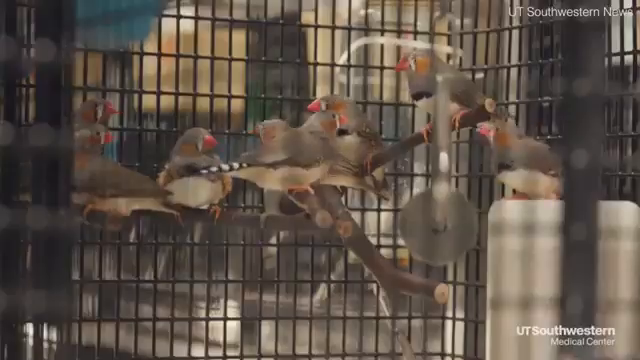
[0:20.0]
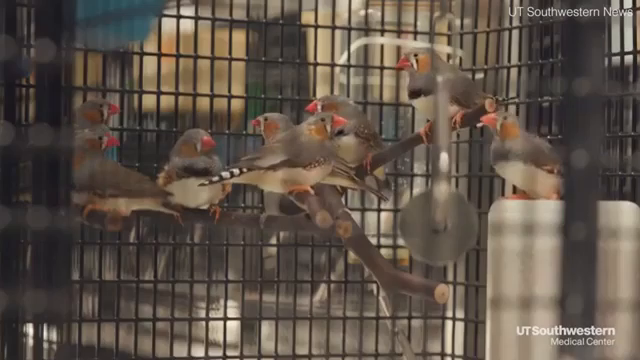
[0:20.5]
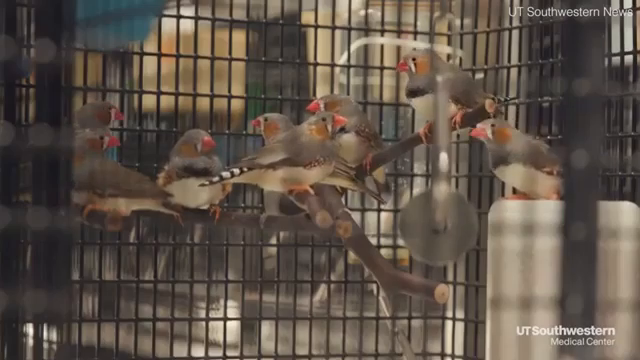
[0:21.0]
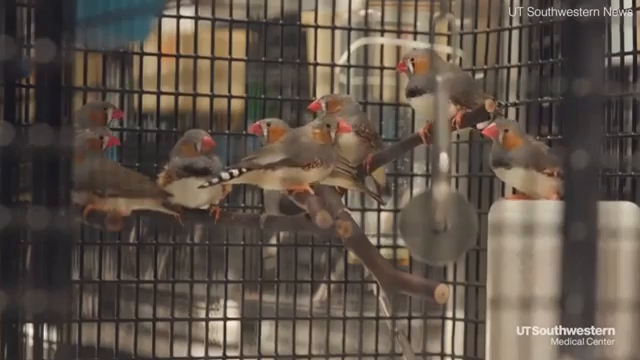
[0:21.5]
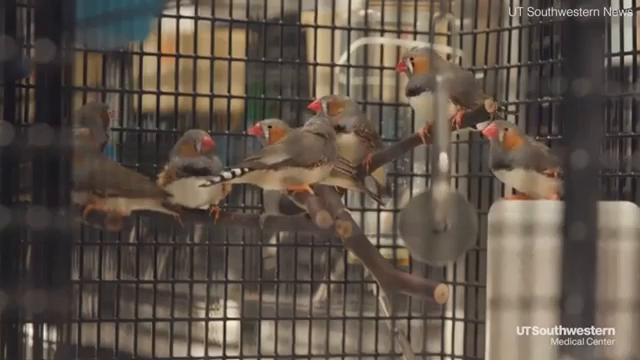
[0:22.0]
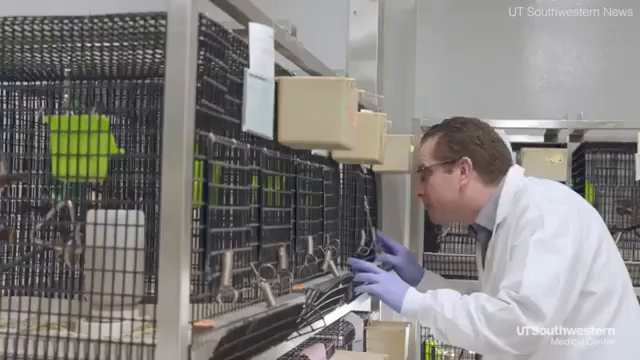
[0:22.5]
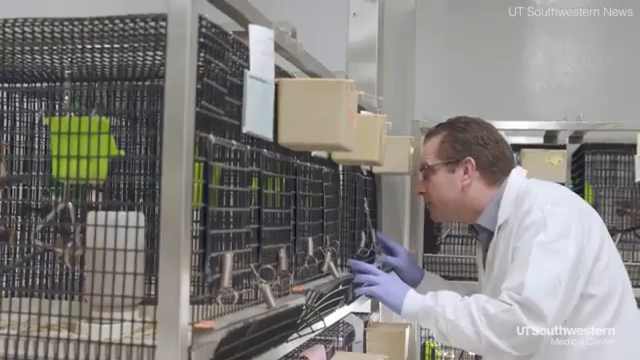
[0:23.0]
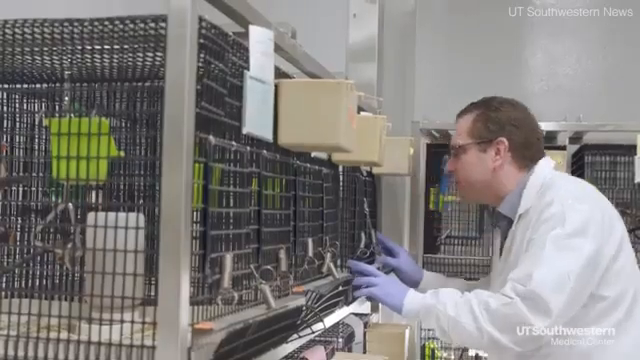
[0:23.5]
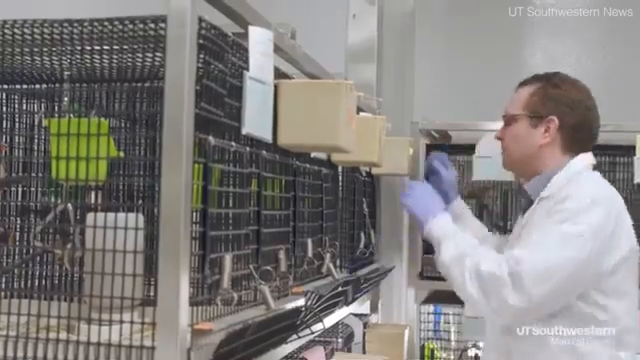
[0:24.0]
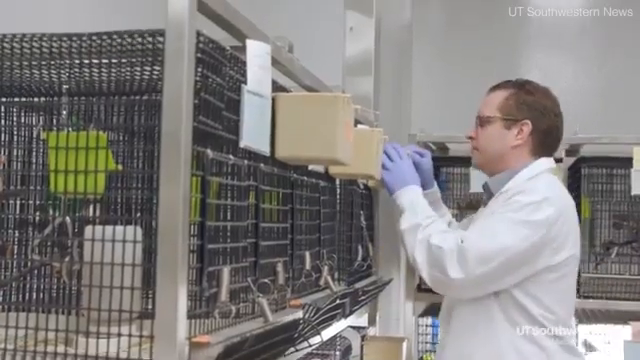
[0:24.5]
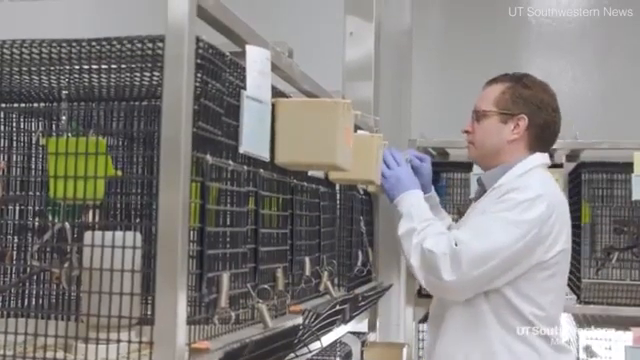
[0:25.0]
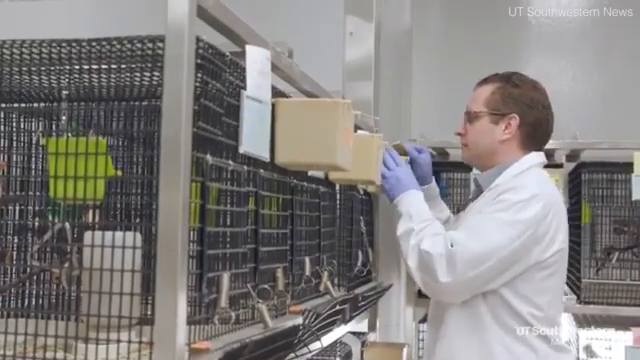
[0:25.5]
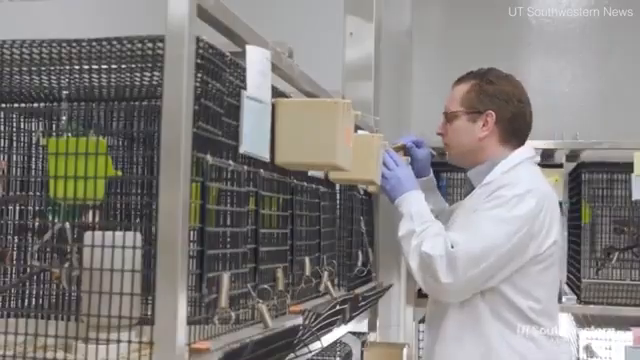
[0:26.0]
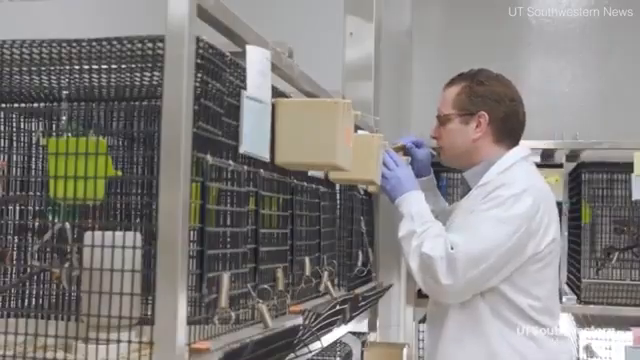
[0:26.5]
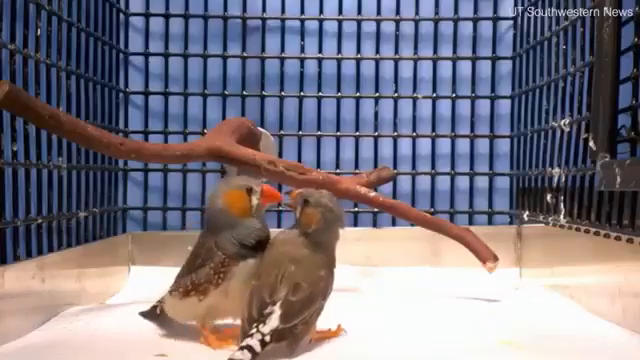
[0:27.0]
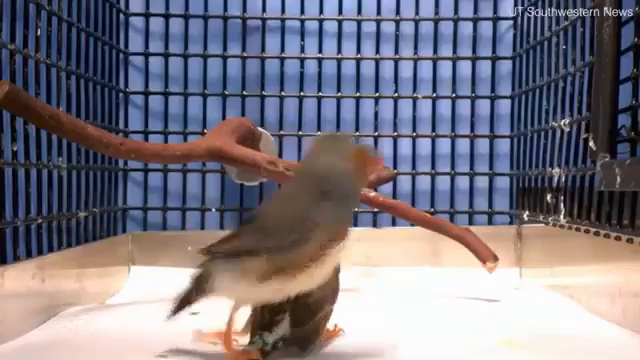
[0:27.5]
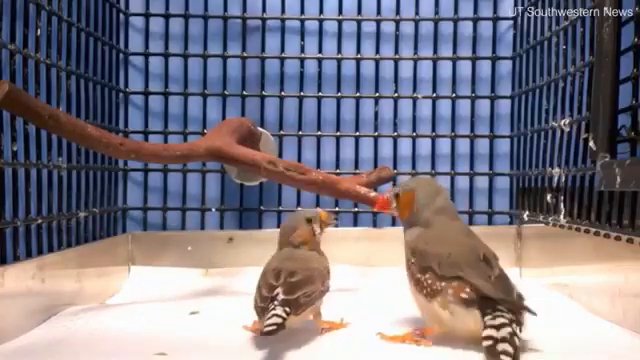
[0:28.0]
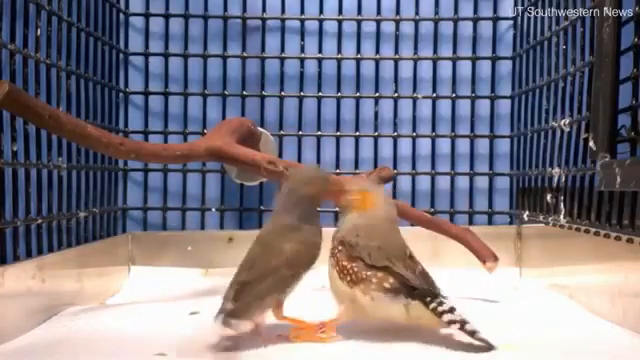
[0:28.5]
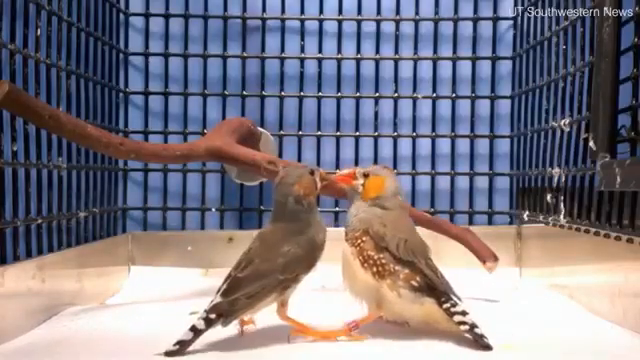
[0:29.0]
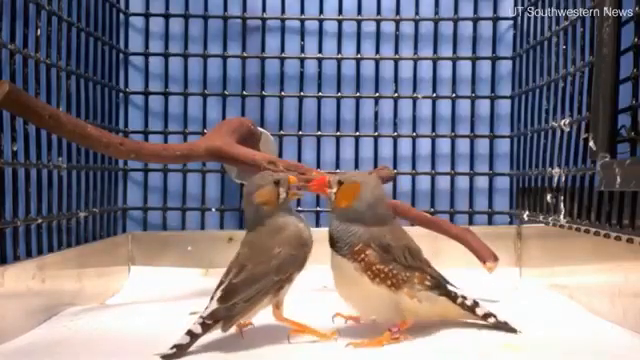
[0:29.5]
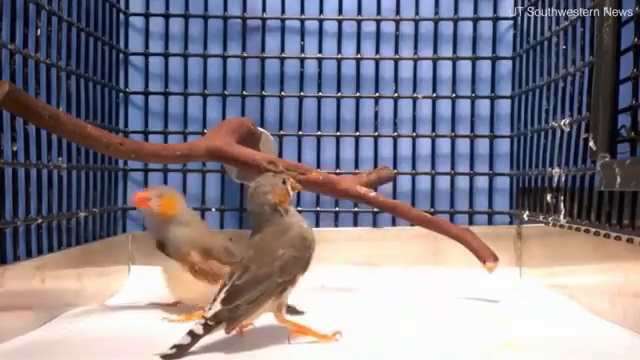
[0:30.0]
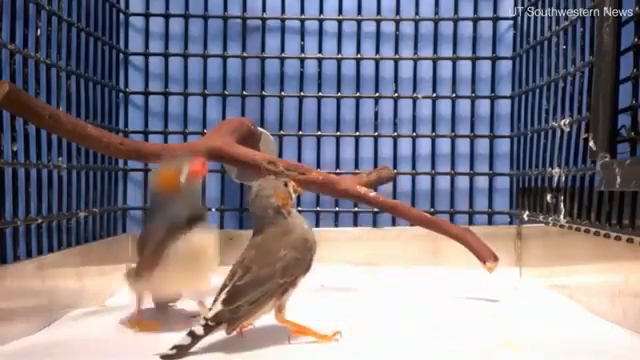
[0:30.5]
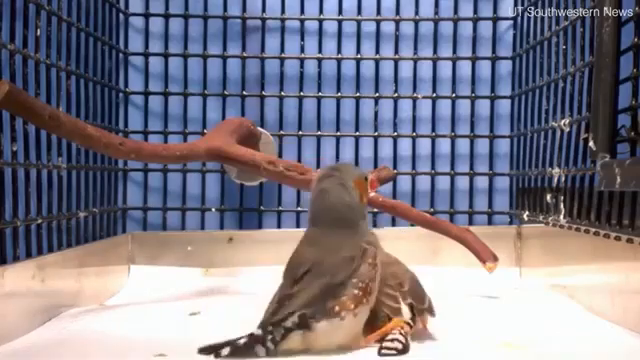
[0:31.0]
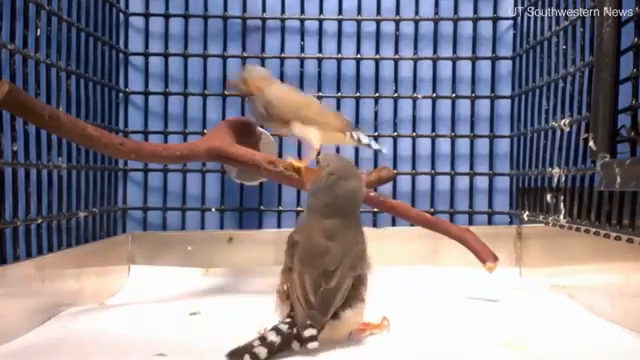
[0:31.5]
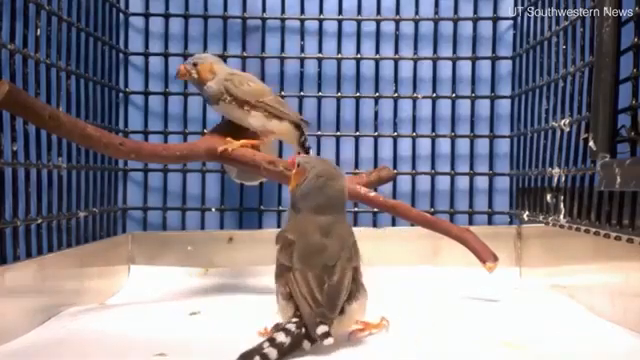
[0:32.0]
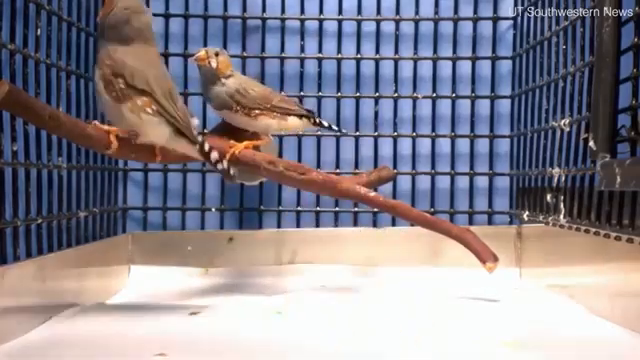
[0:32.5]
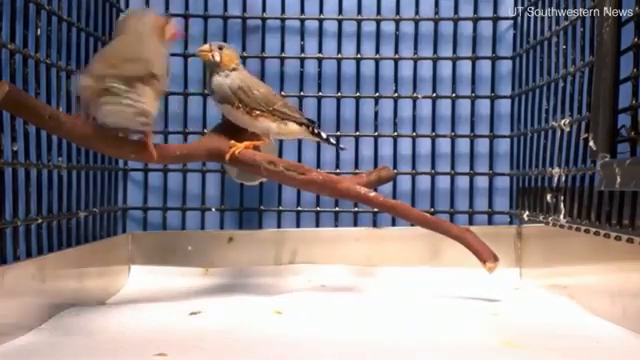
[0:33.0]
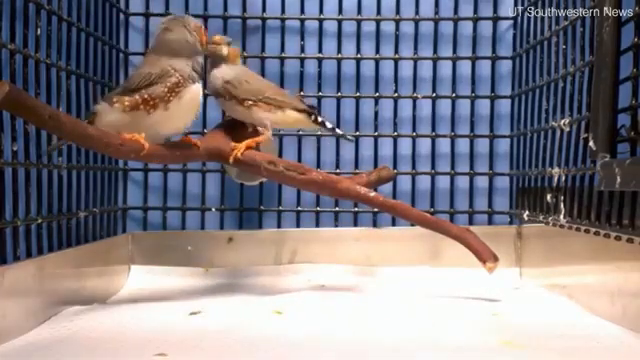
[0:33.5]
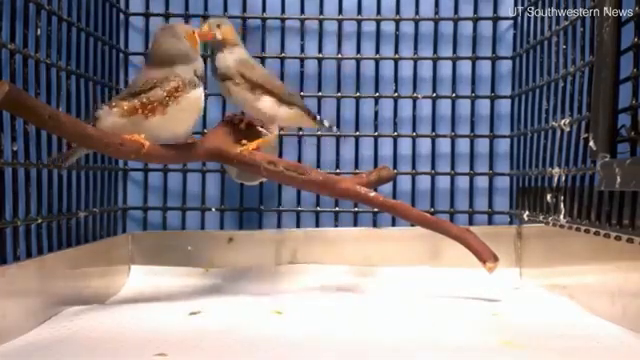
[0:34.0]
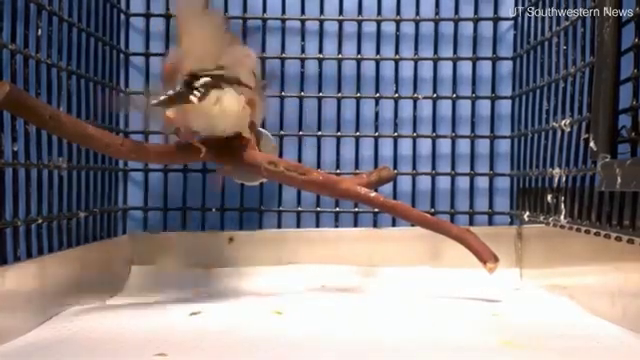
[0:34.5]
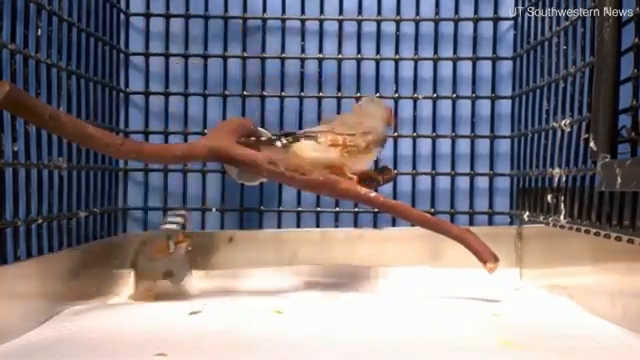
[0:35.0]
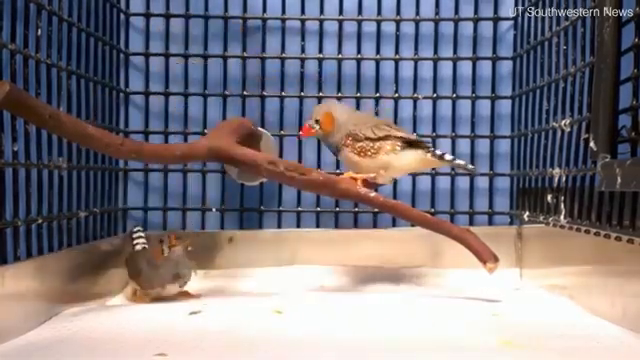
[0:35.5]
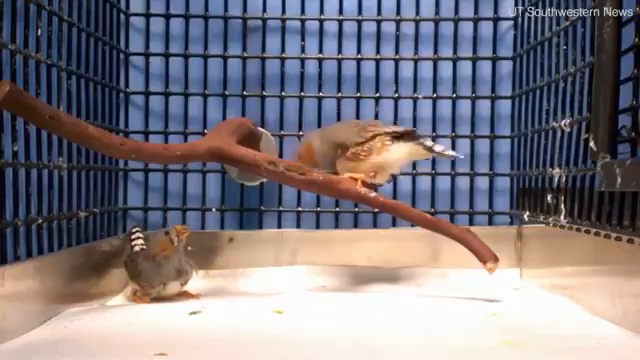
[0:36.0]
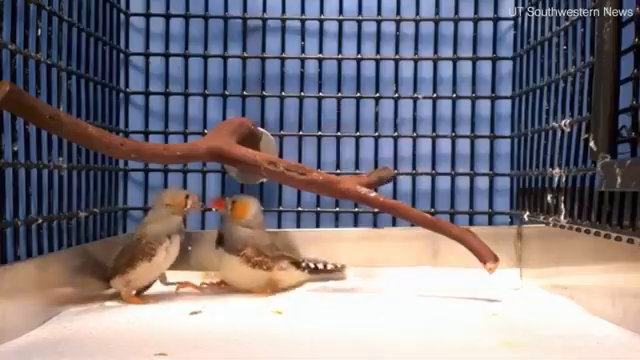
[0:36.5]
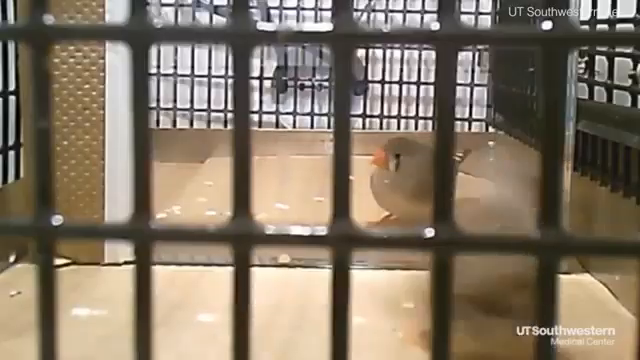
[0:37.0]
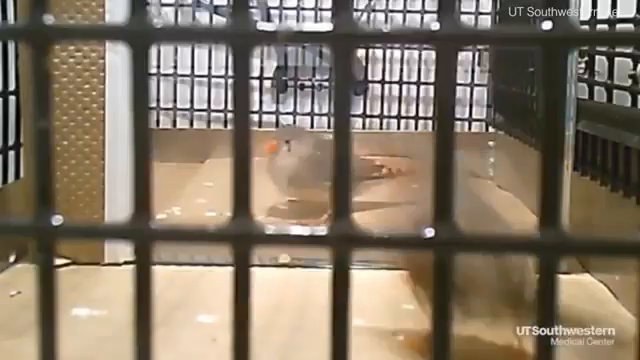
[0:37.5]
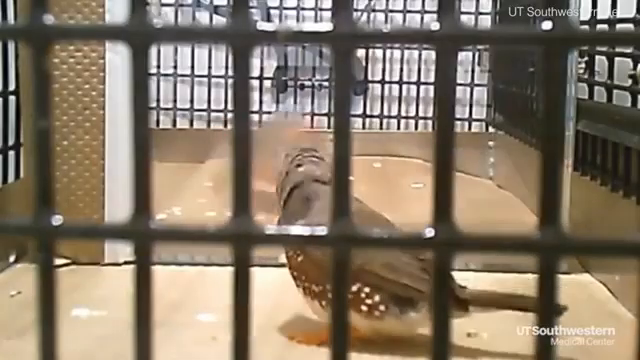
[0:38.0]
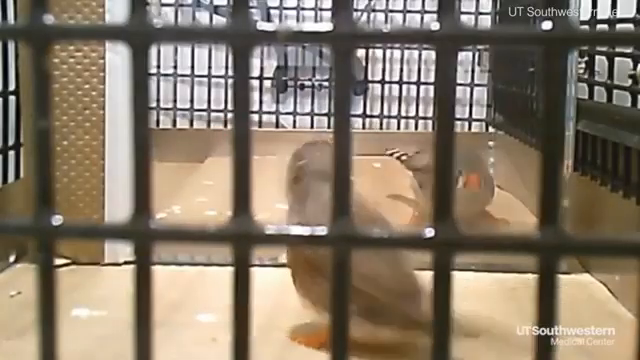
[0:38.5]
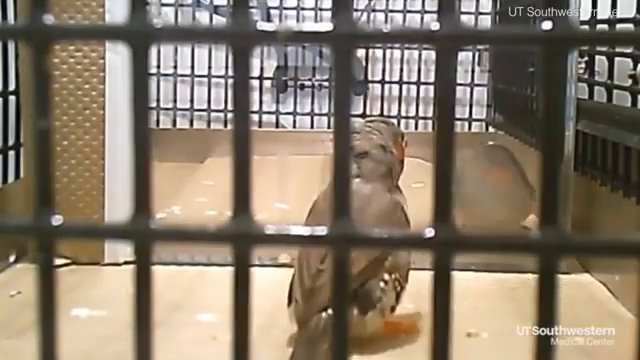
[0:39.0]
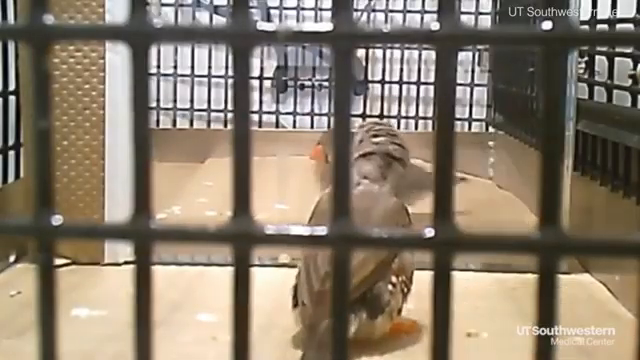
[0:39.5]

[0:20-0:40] The view is inside a bird cage, where all the birds appear to be the same species. They are all perched on a piece of wood attached to the cage, and there are around eight or nine of them. Each has a beige underbelly with grayish brown on top, a black line, a thicker white line, another black line, and orange beaks. They seem to be looking at their heads. The man who was talking earlier appears, now in a white coat and wearing gloves, and he appears to be looking in a bunch of cages. The view returns to two of the birds, now on the floor of the cage, twiddling about, jumping all over each other, jumping onto the wood and back down, and sort of pecking each other, playing. The camera switches to a different angle in the cage, showing the same behaviors.